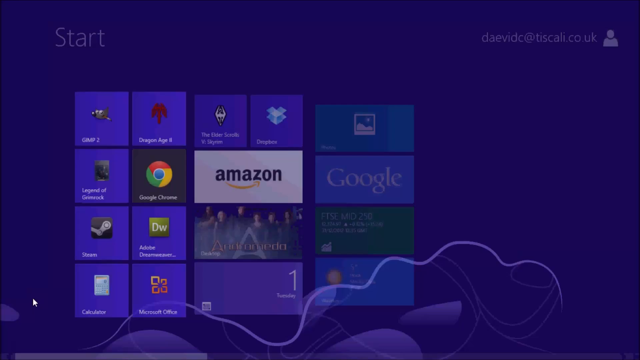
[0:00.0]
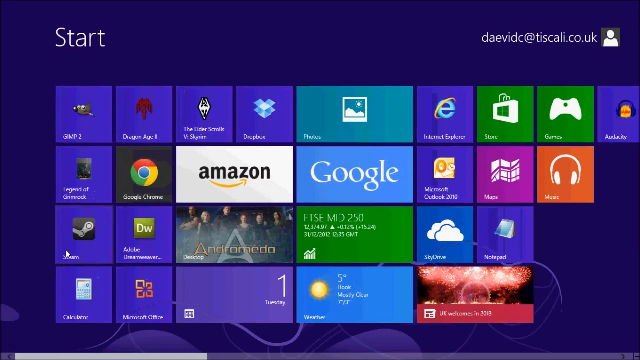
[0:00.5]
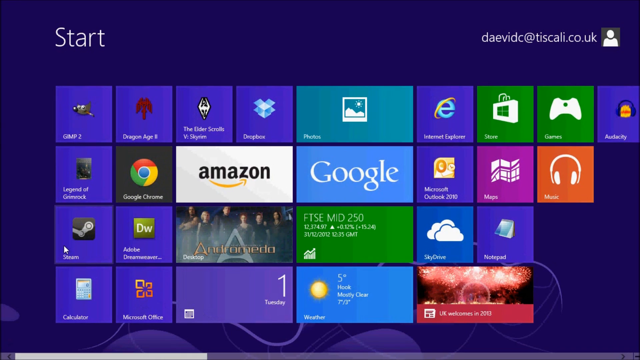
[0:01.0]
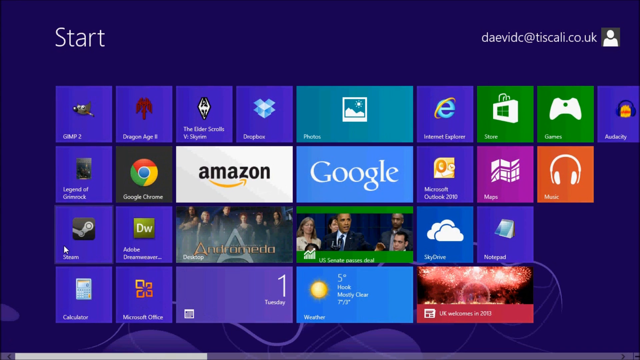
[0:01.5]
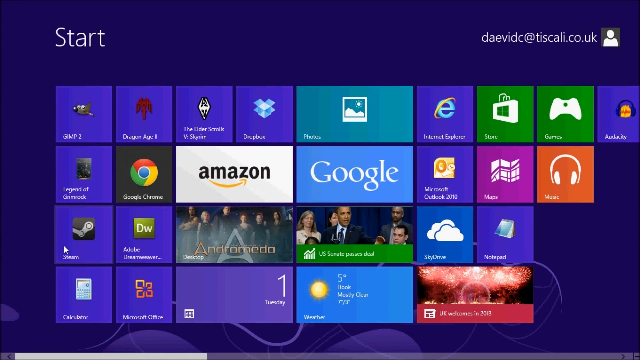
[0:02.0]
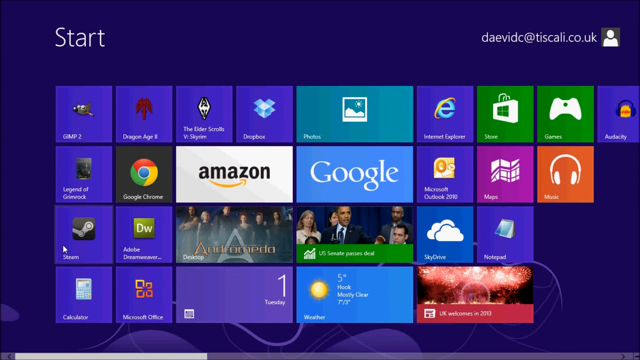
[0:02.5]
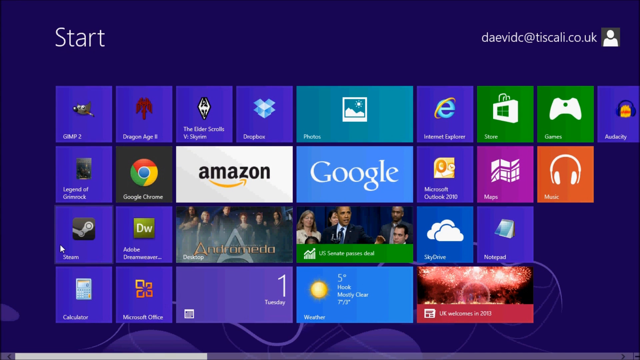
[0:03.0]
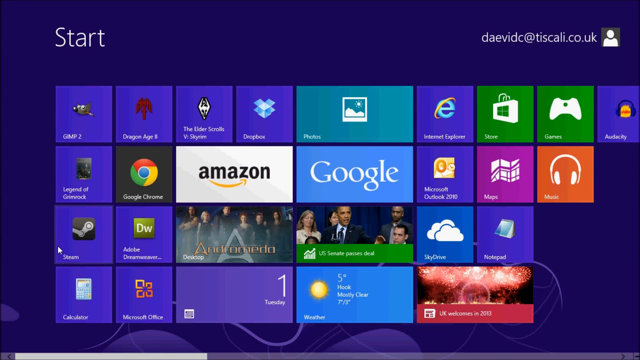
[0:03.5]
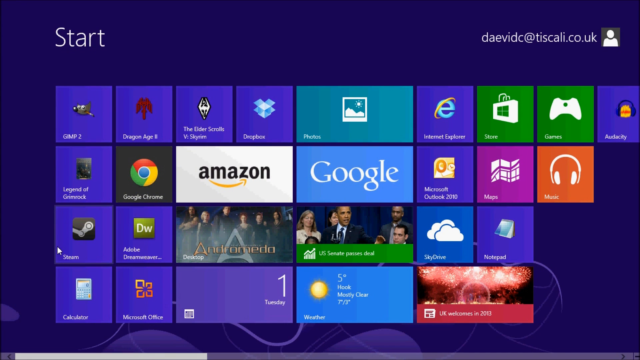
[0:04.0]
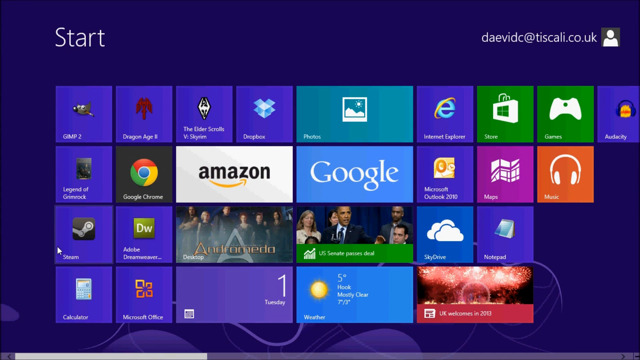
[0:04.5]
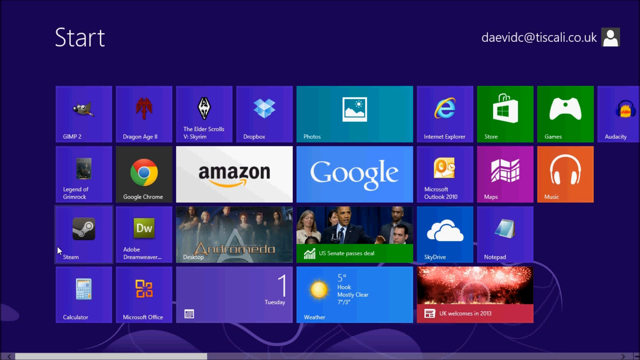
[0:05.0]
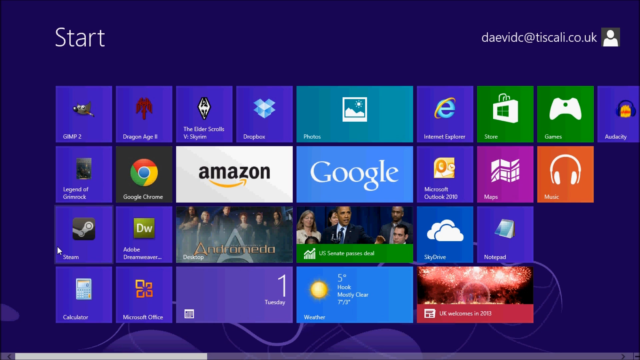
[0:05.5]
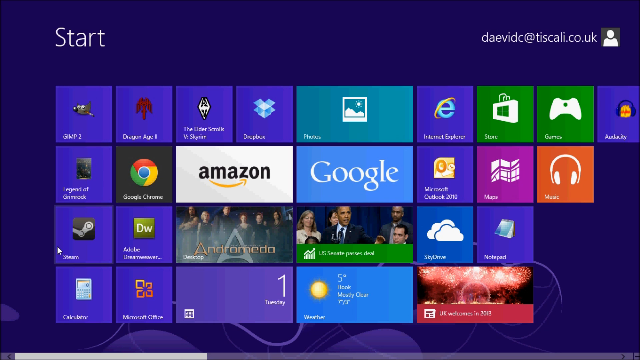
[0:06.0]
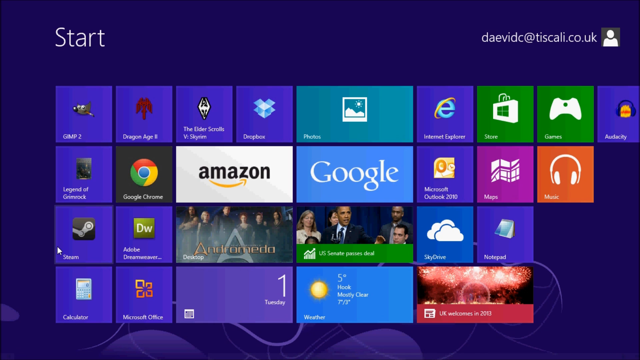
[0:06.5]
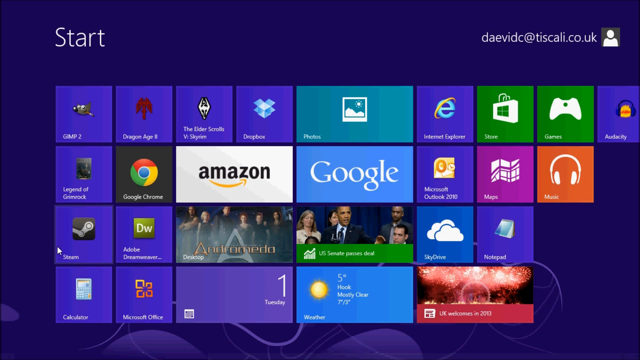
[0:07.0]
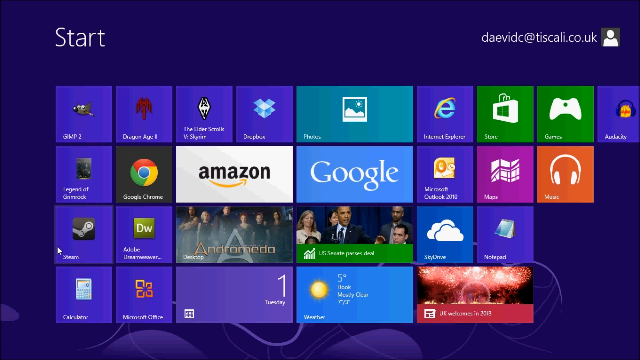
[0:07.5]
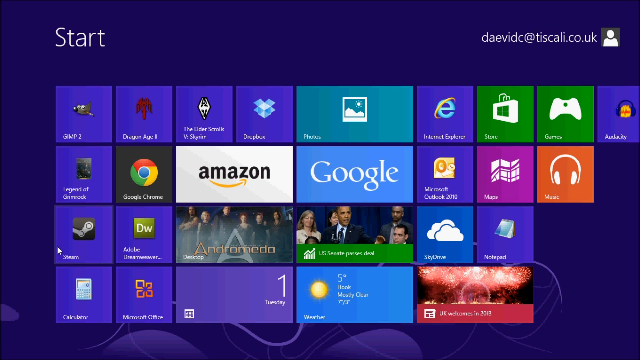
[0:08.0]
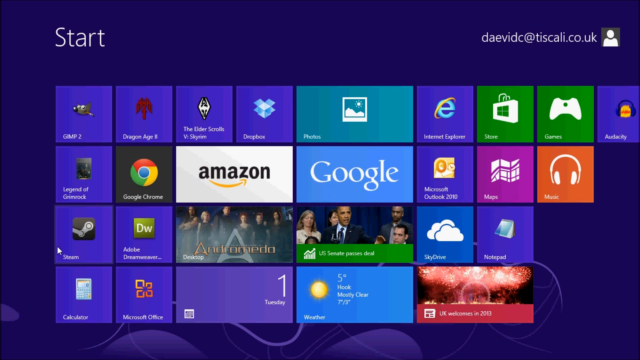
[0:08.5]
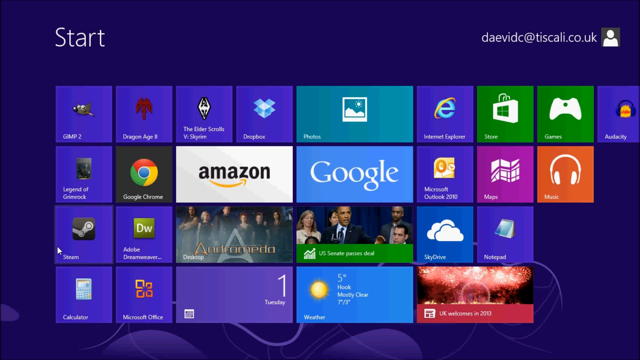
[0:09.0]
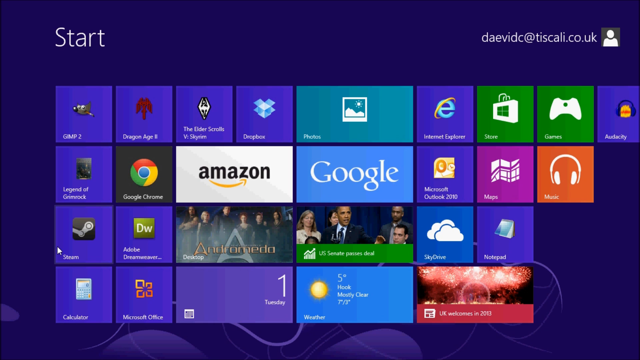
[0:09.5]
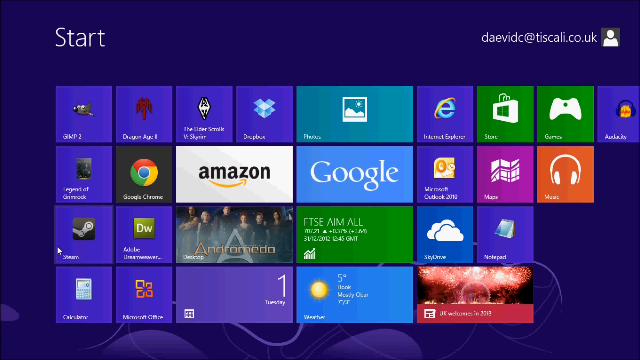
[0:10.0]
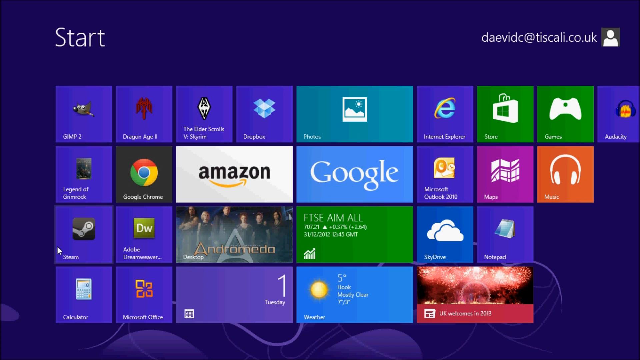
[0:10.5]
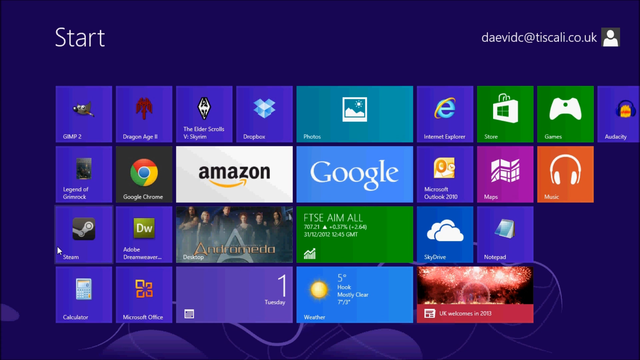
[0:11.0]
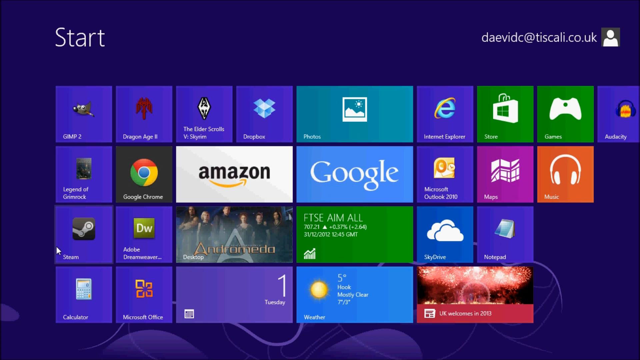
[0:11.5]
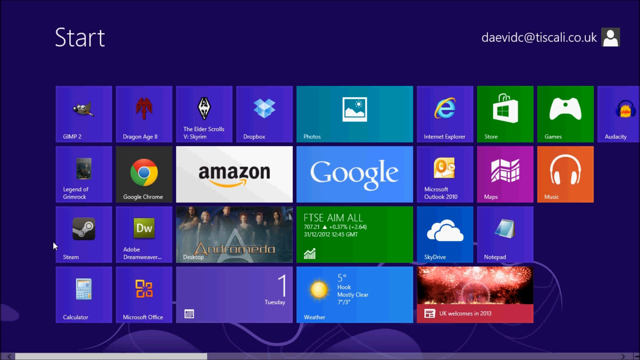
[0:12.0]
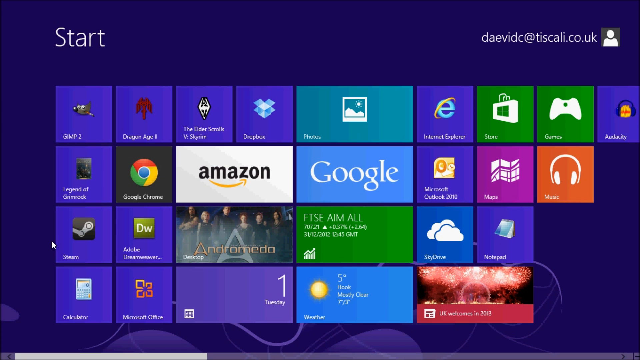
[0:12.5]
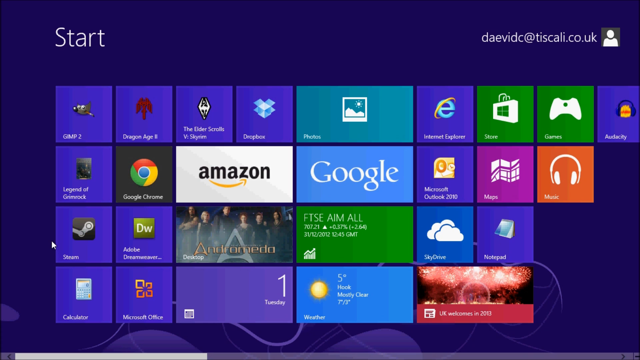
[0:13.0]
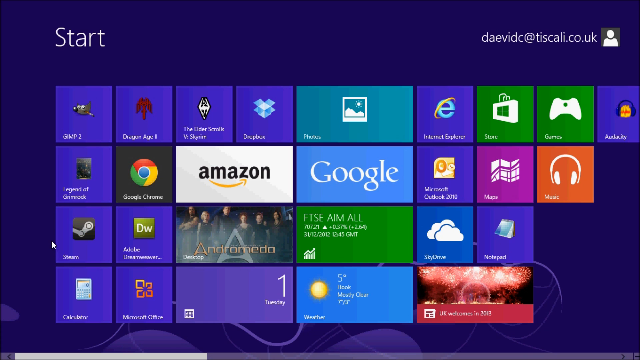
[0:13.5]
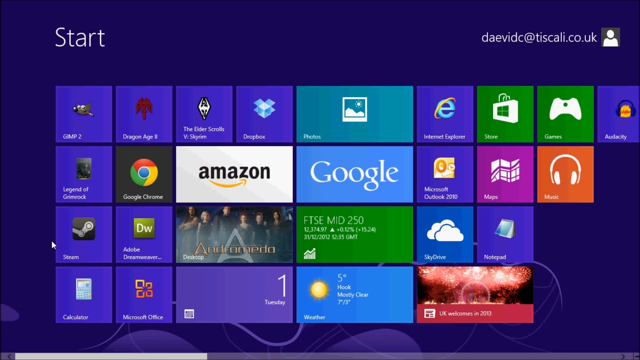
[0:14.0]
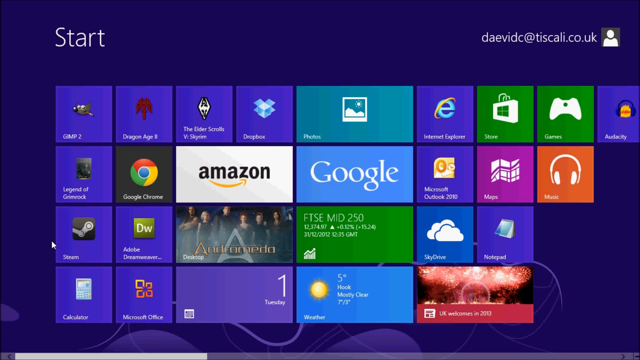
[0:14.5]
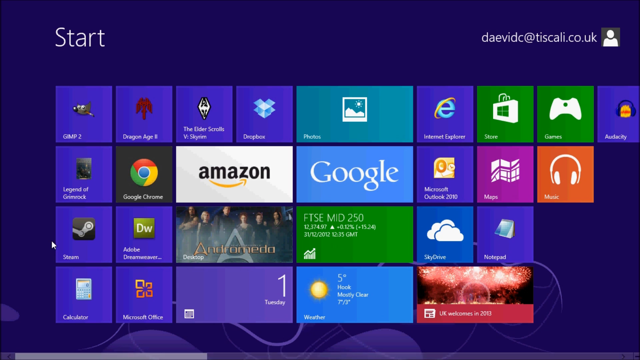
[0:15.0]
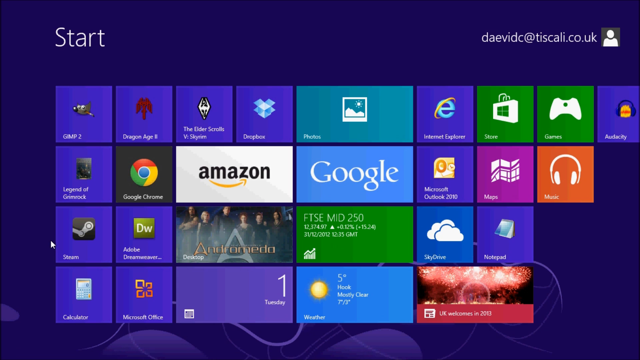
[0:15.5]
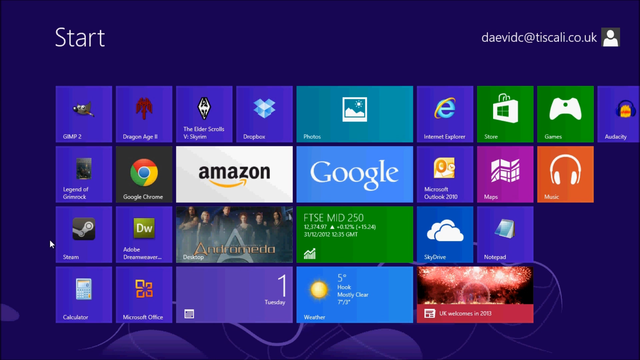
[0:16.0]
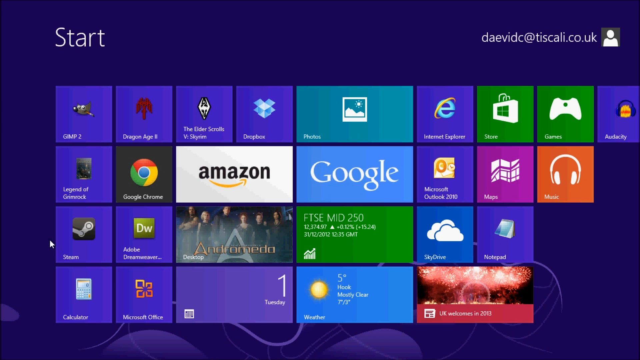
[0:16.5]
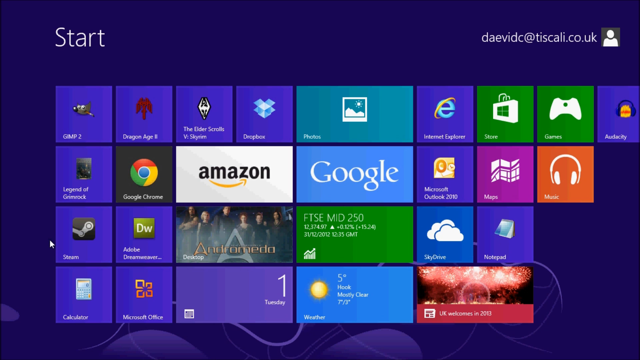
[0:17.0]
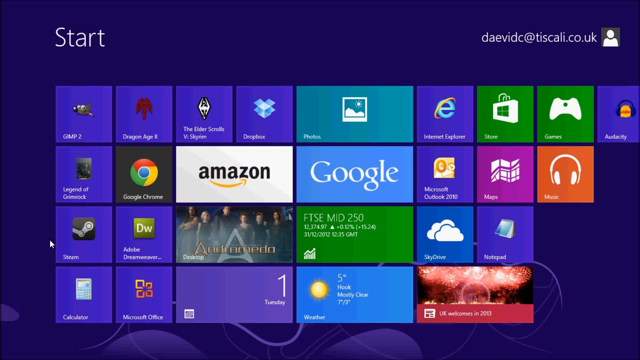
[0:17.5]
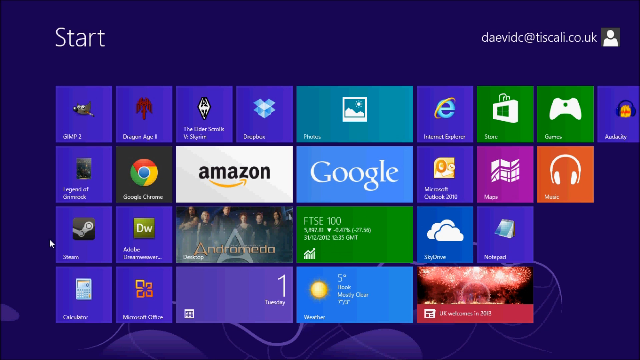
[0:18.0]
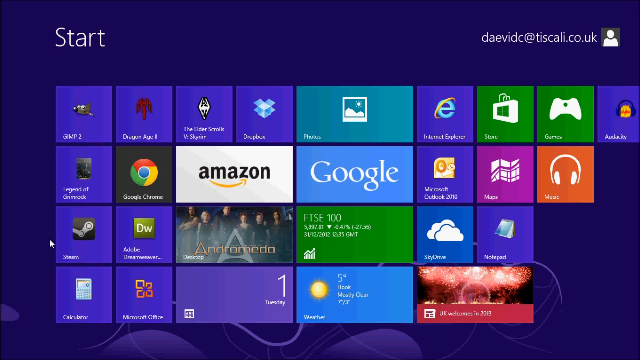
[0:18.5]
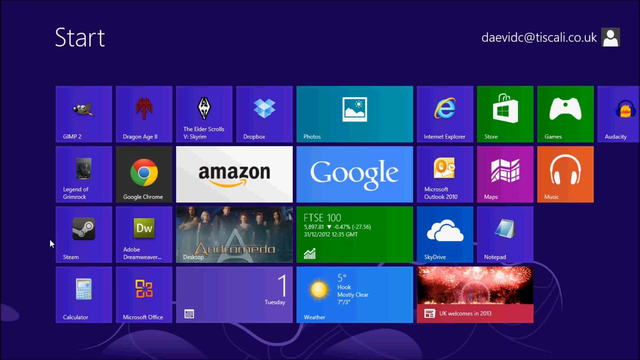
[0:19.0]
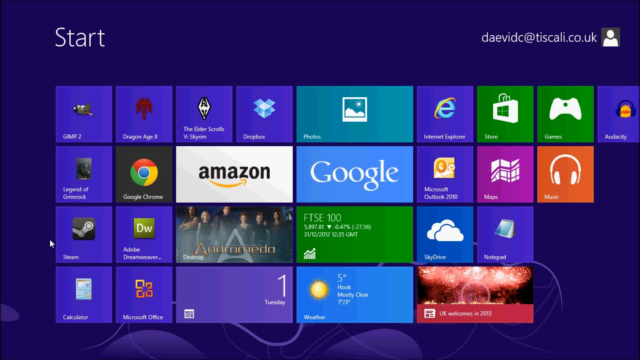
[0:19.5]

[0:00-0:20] The video opens on what looks like the home screen interface of a gaming platform. At the top on the right-hand side is what looks like someone's social media handle, and there are a bunch of apps. "Start" appears in the left-hand corner, and the apps burst out from there. Recognizable apps include Amazon, a Google music app and an Internet Explorer app, and there appears to be a feed for things like the stock market and news. Some games are present, but their tiles are less elaborate than the Amazon and Google apps; they are kind of small, with just the name underneath. Dragon Age, for example, has just an icon within an app square, and the Elder Scrolls Skyrim tile likewise has just the icon of the dragon. Google Chrome shows the full color of its icon, and the Steam tile is a little more elaborate.